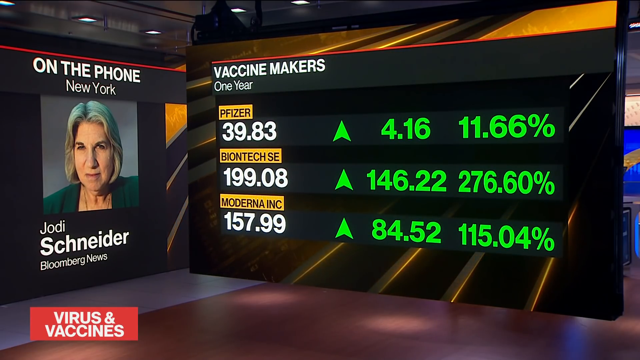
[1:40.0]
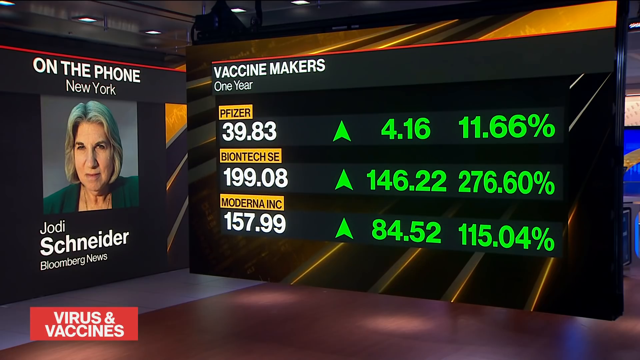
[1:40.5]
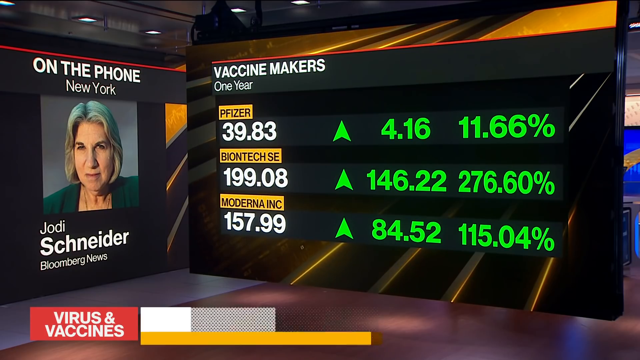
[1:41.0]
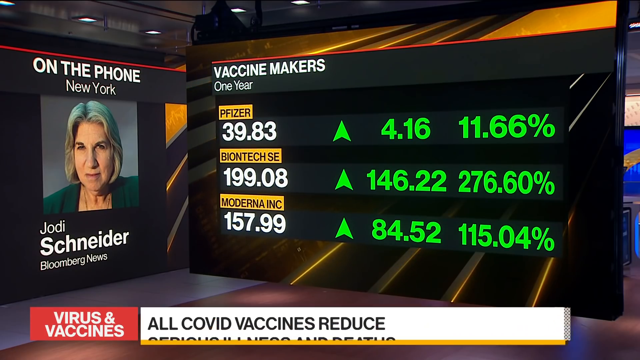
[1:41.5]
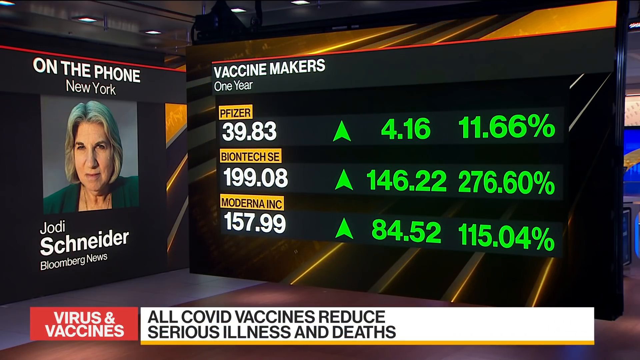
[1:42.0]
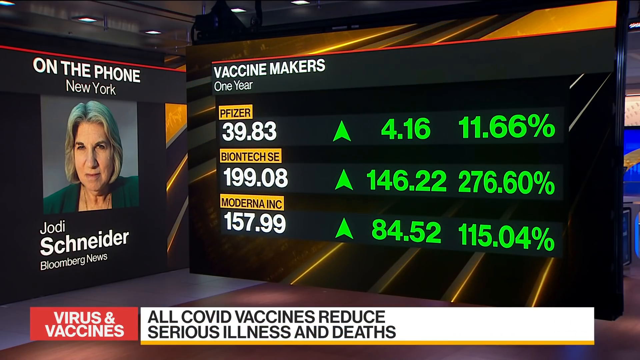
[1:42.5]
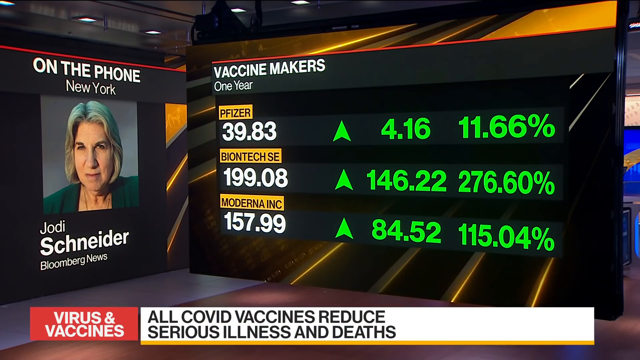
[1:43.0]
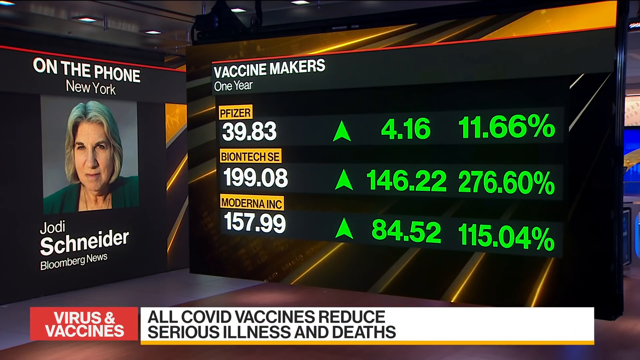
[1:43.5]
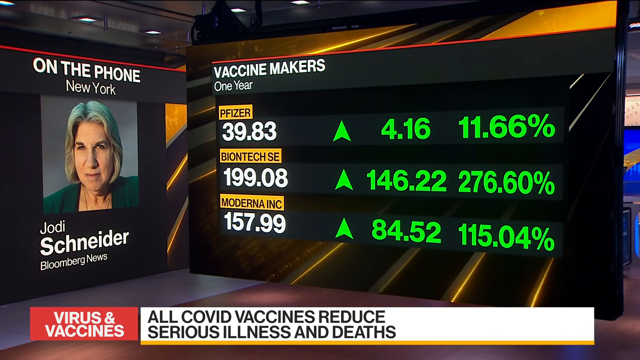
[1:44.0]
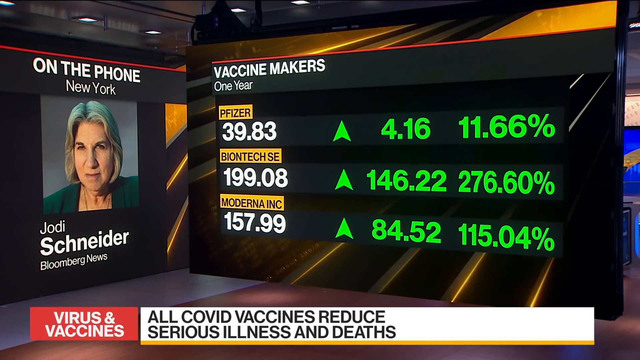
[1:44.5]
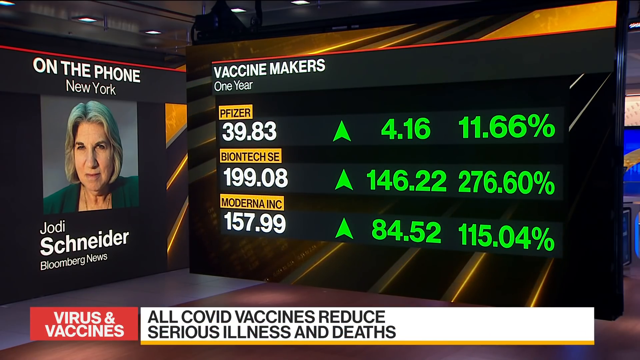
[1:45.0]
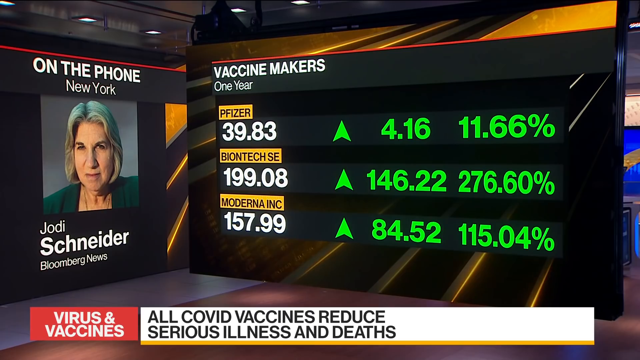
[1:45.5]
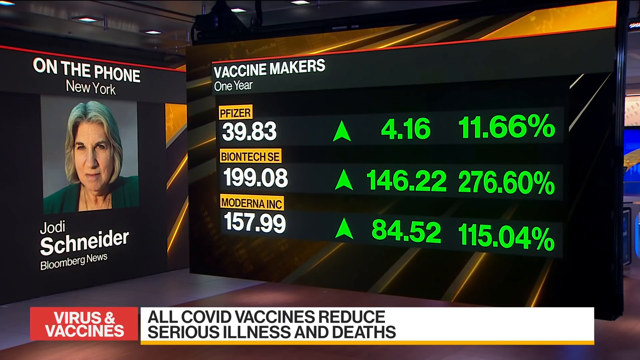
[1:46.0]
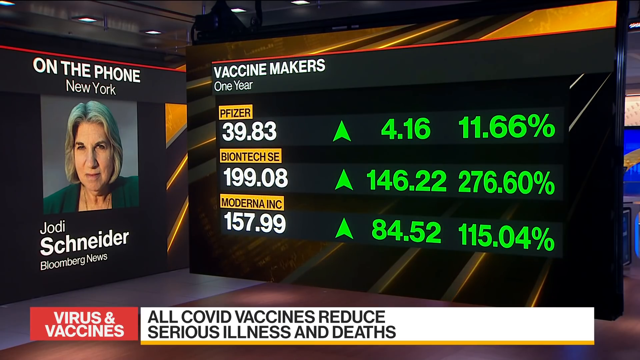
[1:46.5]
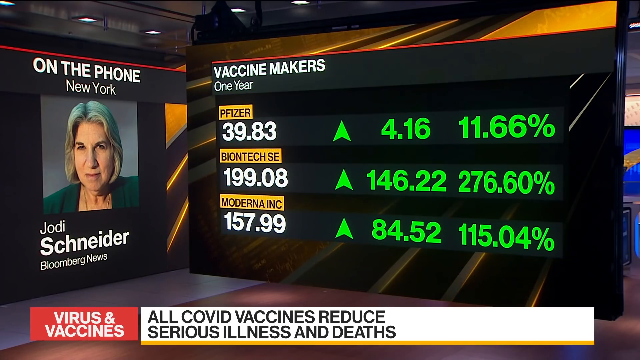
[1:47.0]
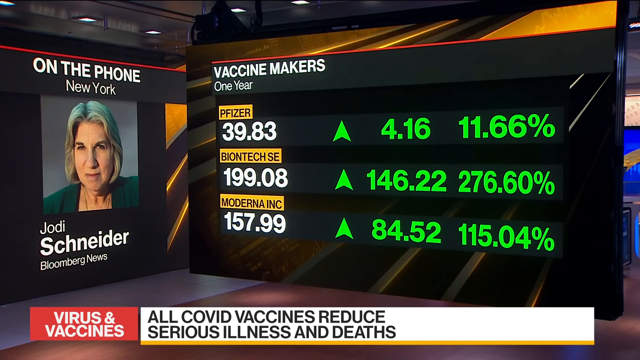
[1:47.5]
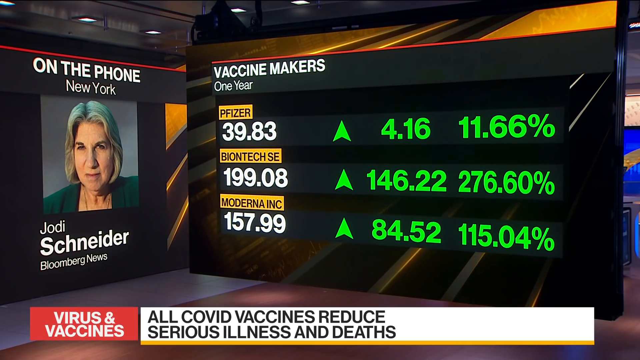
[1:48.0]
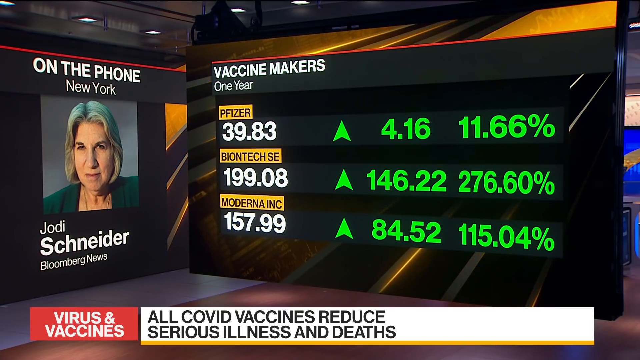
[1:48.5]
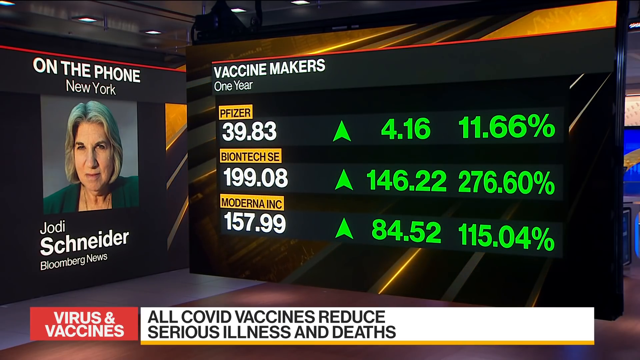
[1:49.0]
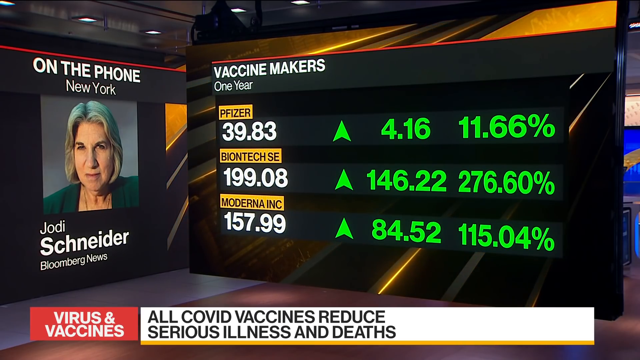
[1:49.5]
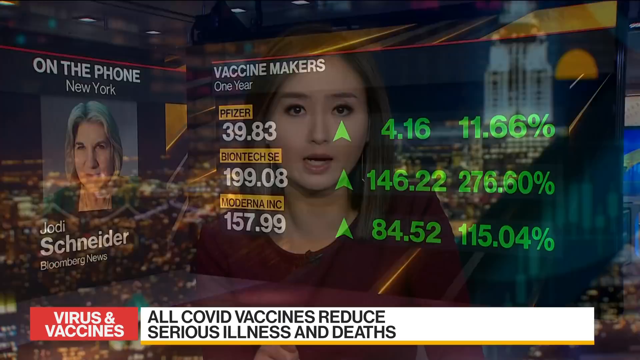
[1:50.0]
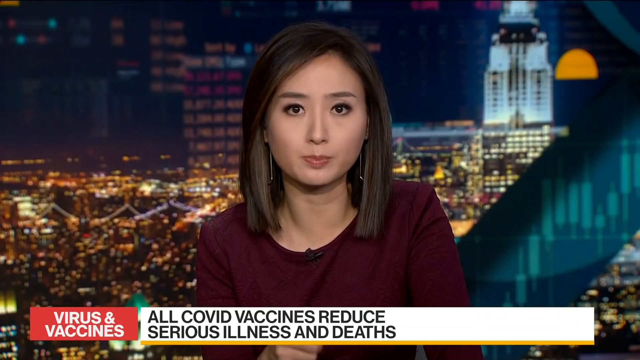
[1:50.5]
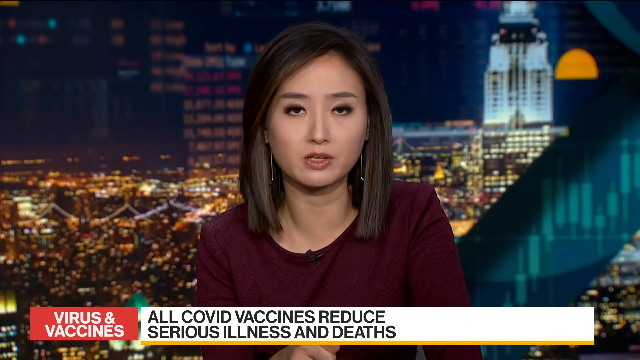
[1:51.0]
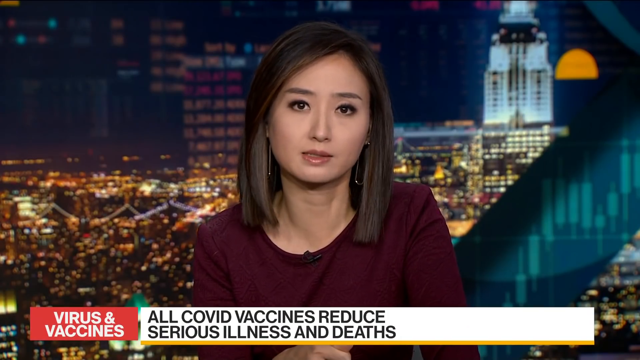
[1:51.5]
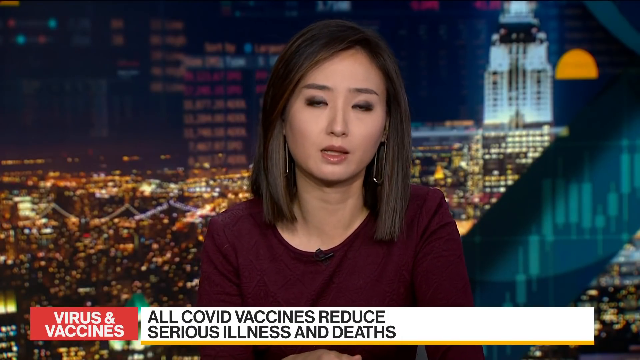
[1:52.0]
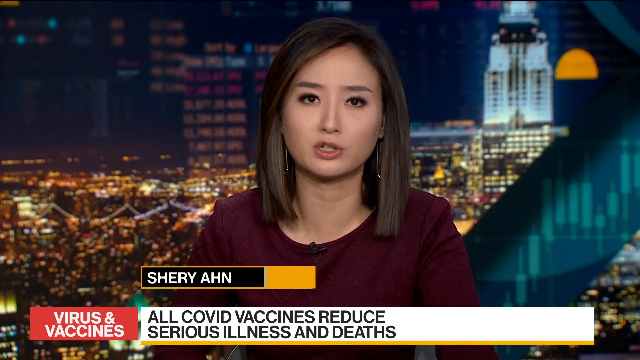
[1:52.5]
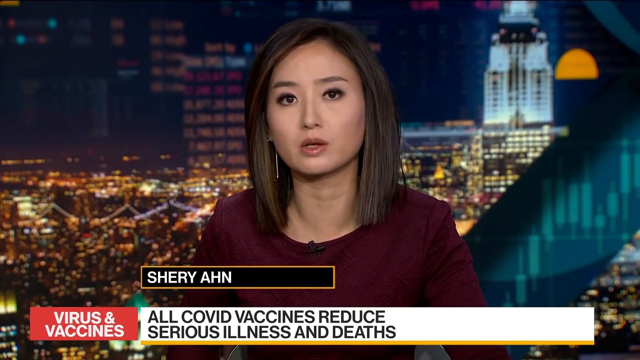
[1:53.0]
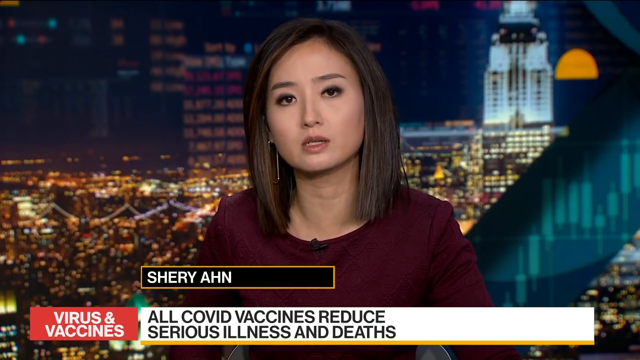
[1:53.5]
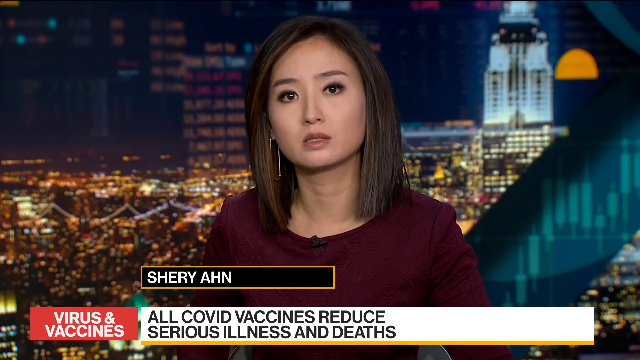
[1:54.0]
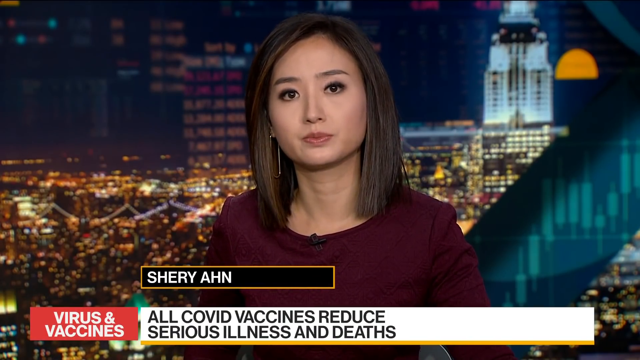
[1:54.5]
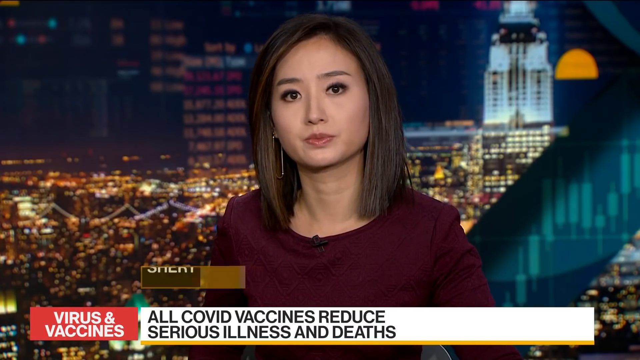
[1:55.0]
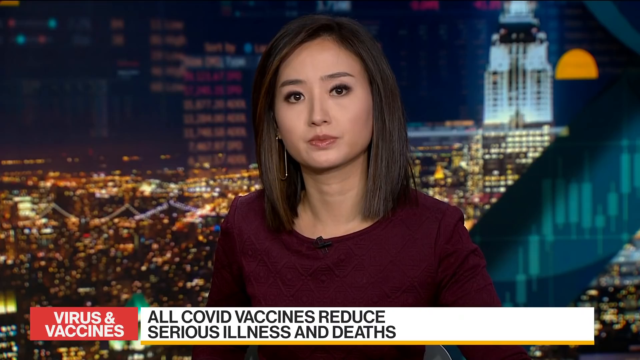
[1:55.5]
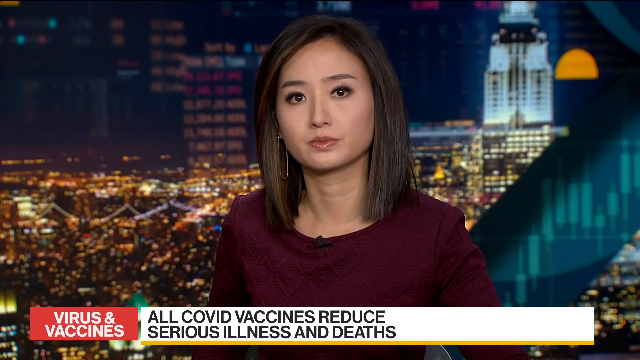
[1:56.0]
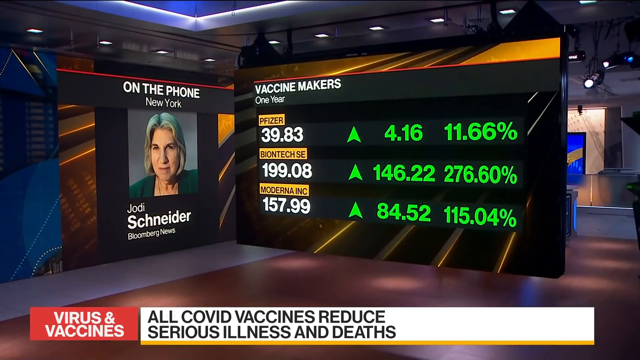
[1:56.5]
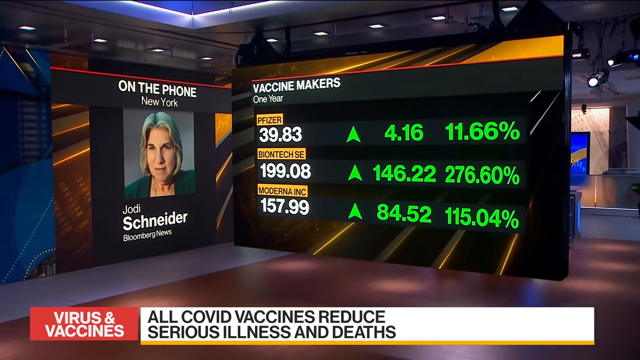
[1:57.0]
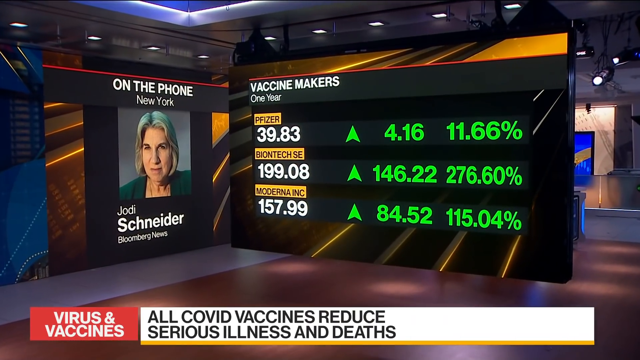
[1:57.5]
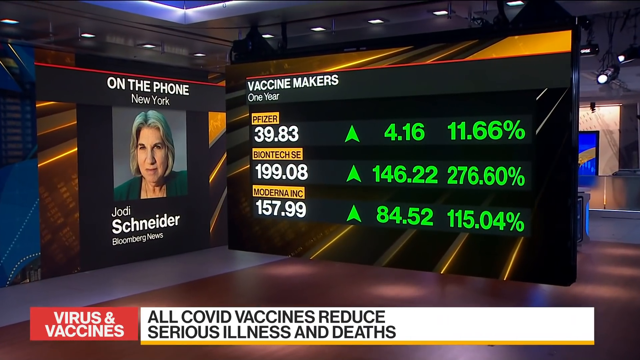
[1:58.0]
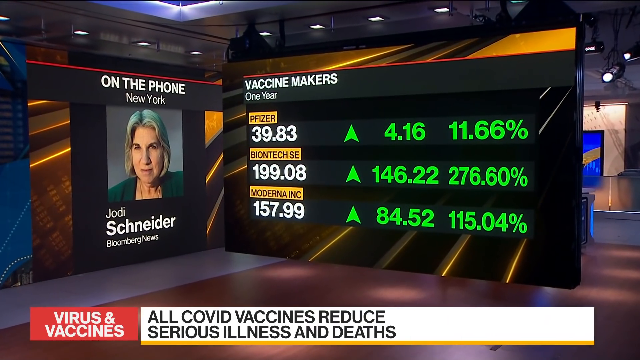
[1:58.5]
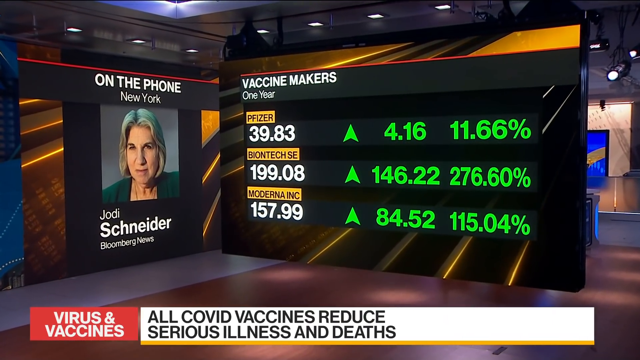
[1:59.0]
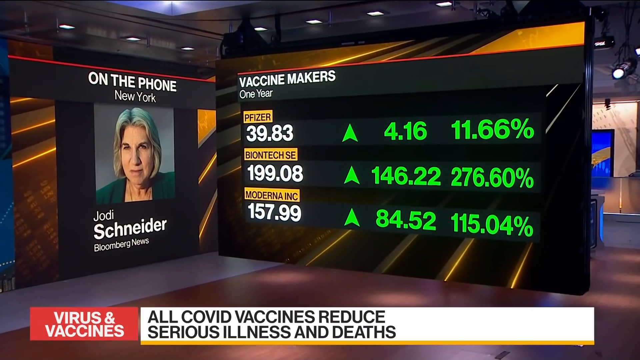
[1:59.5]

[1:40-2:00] COVID vaccine percentages remain on screen, along with text reading "all COVID vaccines reduce serious illnesses and deaths." A new woman then appears; she looks like a brunette Asian woman and wears a red shirt with a microphone on it. It seems to be nighttime, and a big city with skyscrapers is behind her. Her name is apparently Sherry Ann. The broadcast then returns to Jodi on the phone and to the vaccine makers' one-year figures: Pfizer up 11.66, BioNTech SE up 276.6%, and Moderna up 115.04%.